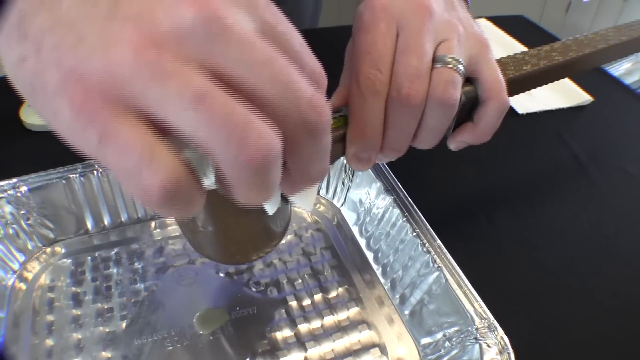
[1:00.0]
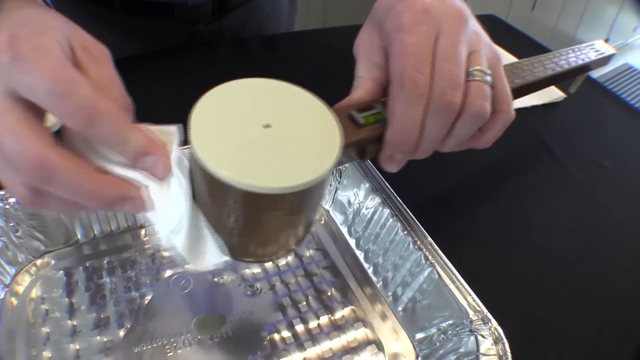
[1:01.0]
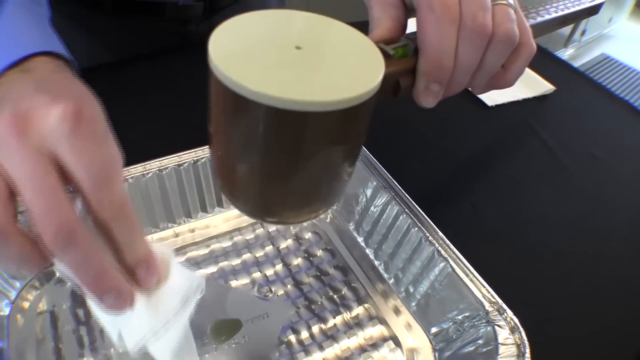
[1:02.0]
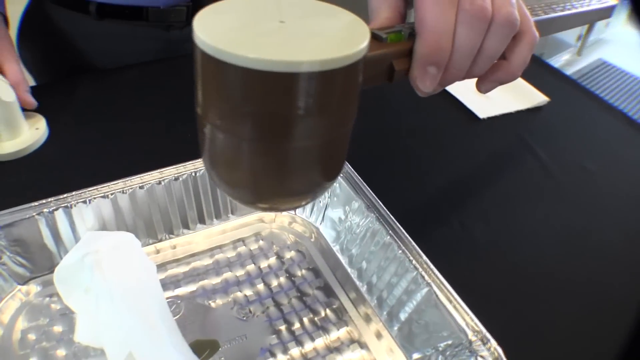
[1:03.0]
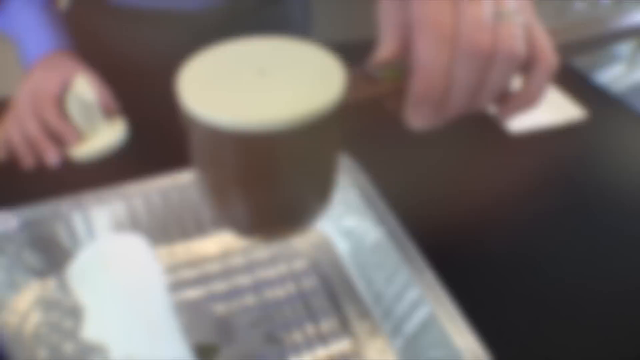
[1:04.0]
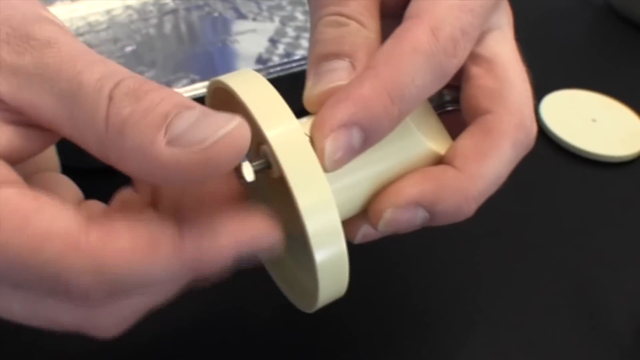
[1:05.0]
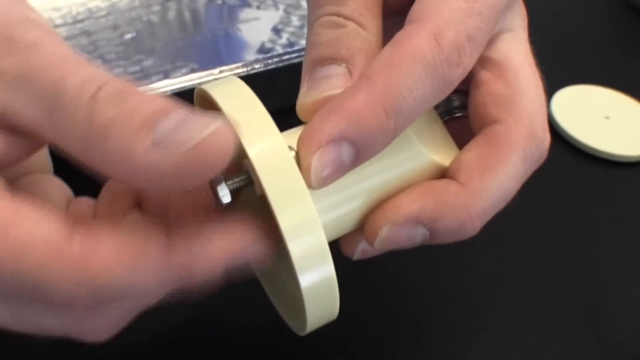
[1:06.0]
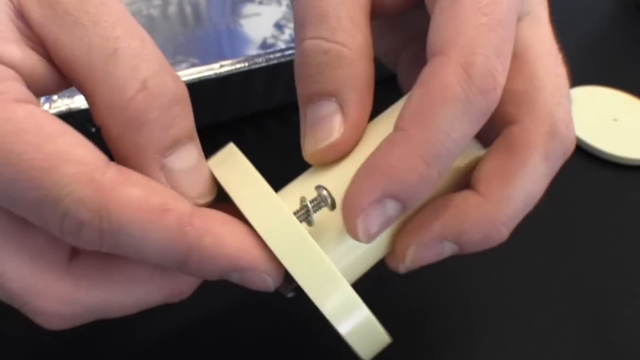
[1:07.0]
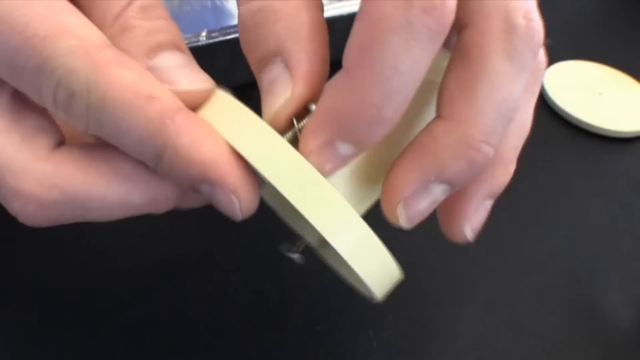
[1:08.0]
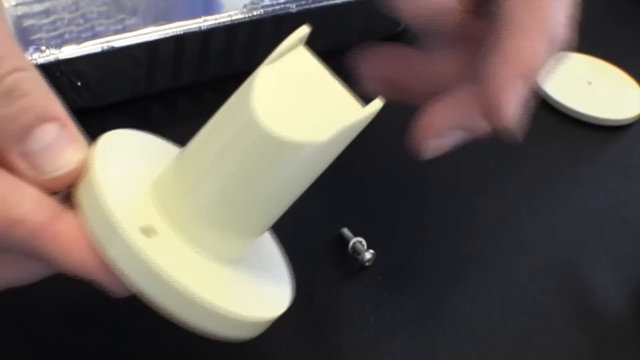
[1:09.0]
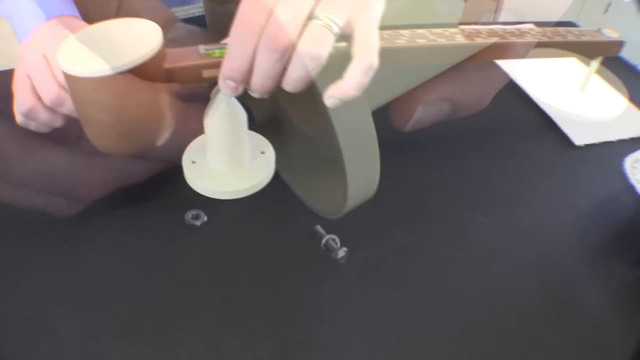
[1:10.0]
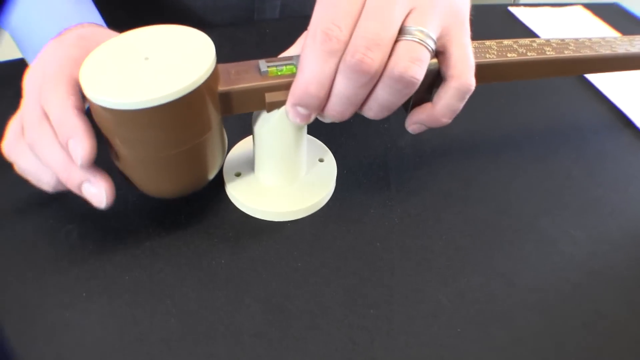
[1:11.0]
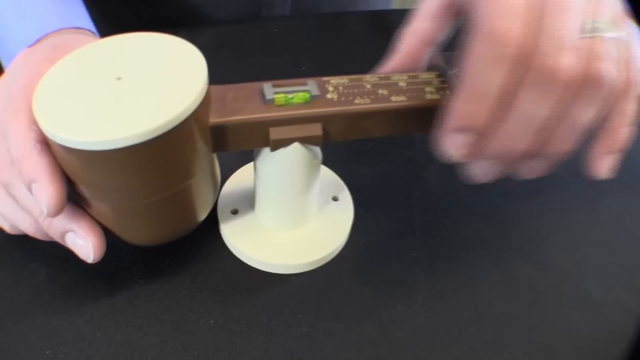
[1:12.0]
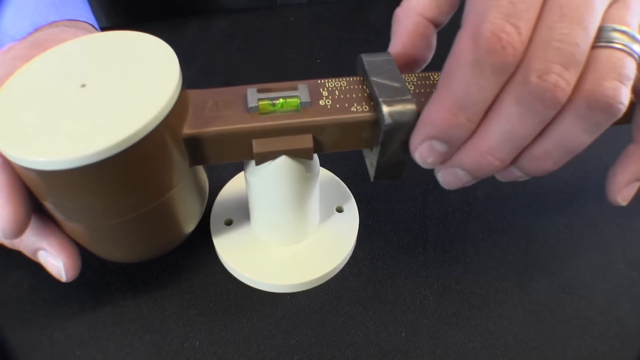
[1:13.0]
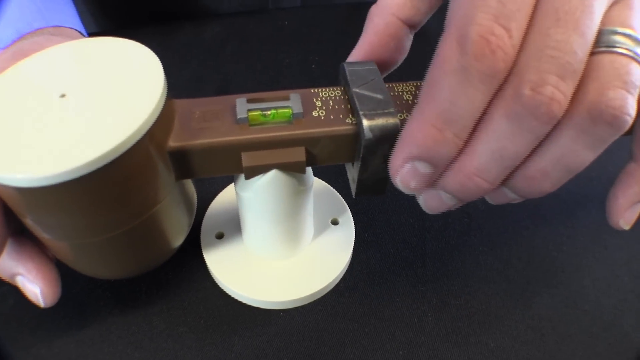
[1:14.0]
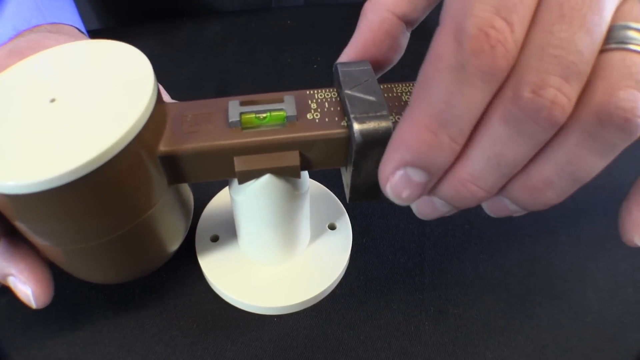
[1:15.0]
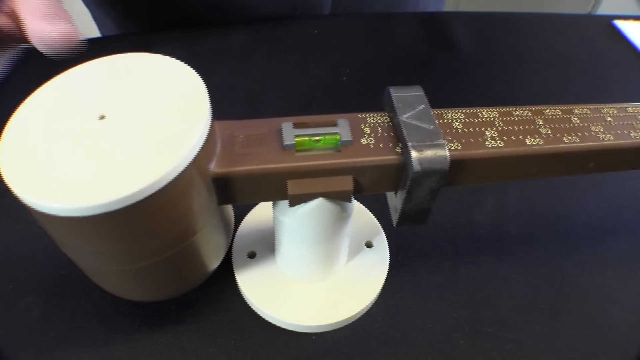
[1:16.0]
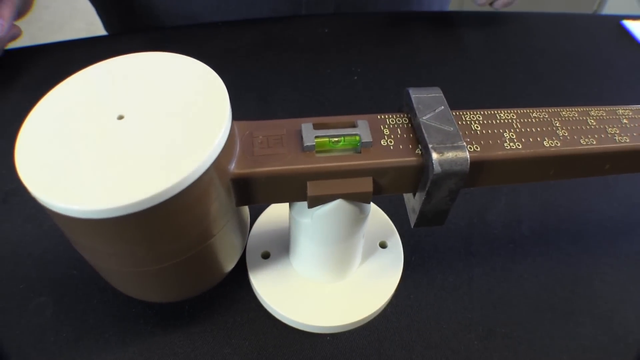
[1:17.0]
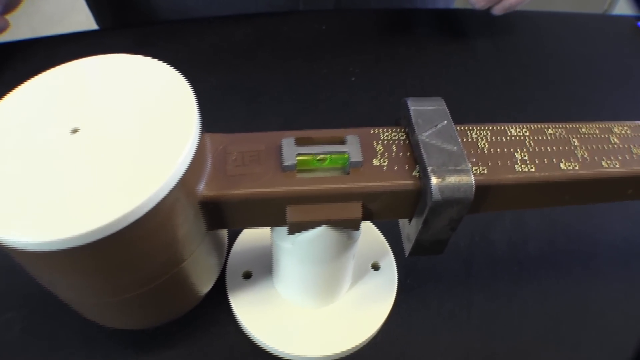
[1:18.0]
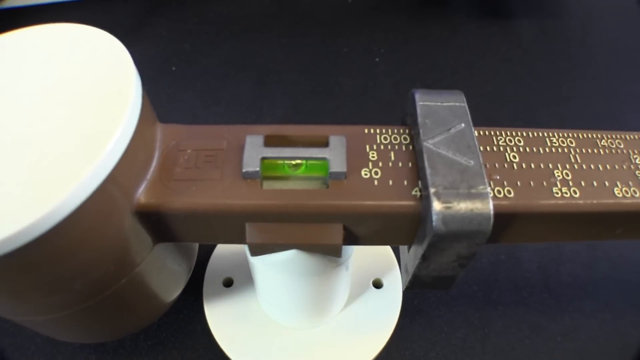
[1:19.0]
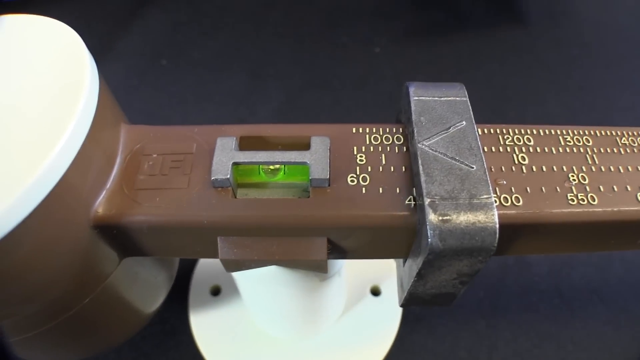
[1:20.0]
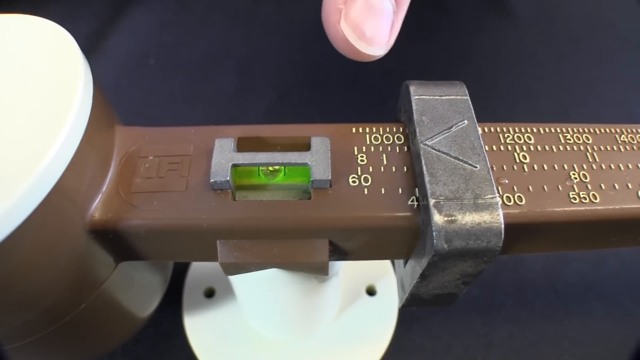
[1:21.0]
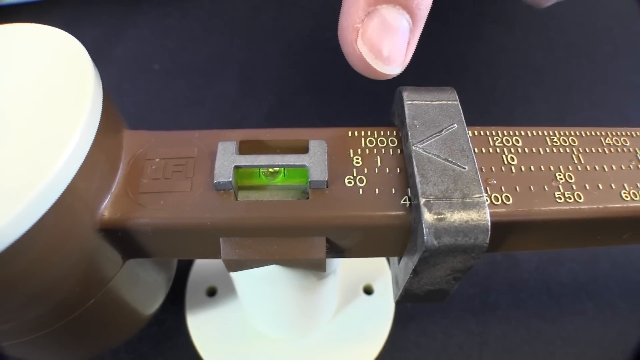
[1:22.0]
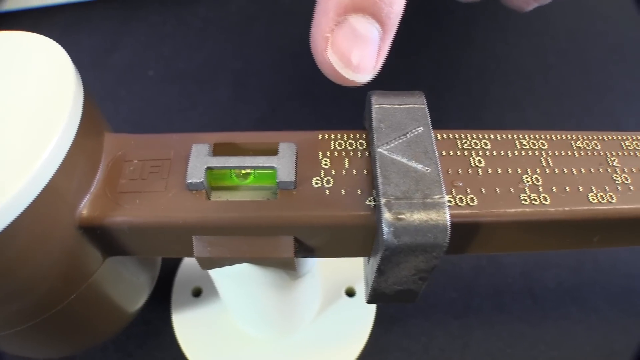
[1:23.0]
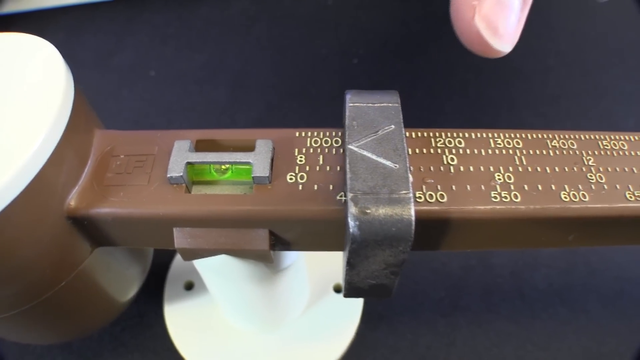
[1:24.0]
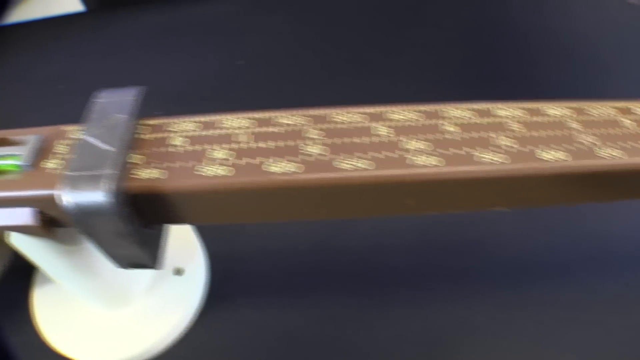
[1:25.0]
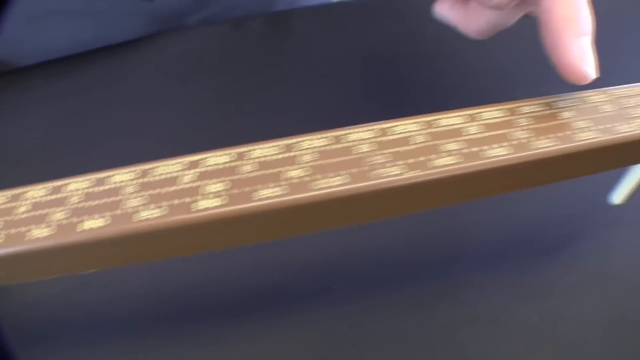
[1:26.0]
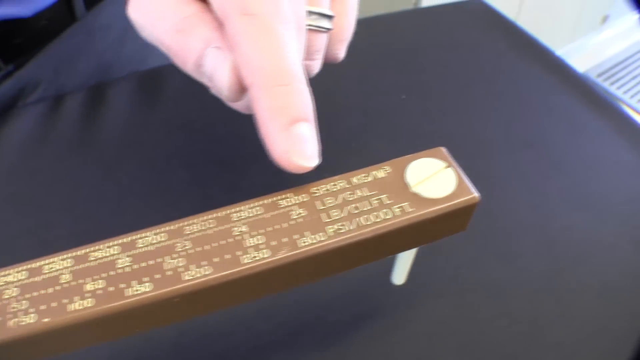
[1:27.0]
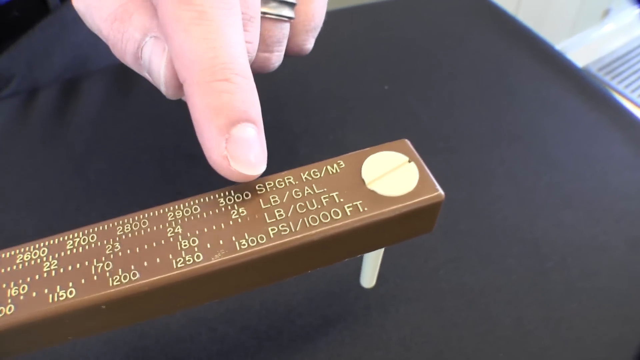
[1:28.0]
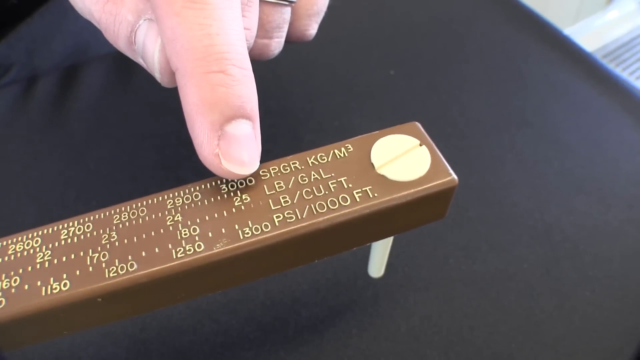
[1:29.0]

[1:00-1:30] The person continues wiping the mud off the disc and the cup with his right hand, and once it is clean he drops the paper towel. The video fades out and fades into a close-up of the person's hands. He takes a couple of screws out of a white plastic contraption with a circular base and a cylinder that rises up and ends in a point; the screws are at the 12 o'clock and 6 o'clock positions of the disc. After removing the screws, he lays the plastic contraption on the counter and balances the brown measurement apparatus on the pointed end of the white plastic balancer. He then moves a weight that is on the rod until it is counterweighed by the mud in the cup, so the apparatus is exactly balanced. There is also a green balancer to ensure the apparatus is properly balanced. The video shows a close-up of the balancer, and the person points at the measurement point. He then shows that the apparatus goes all the way up to 3,000 kilograms per meter cubed.